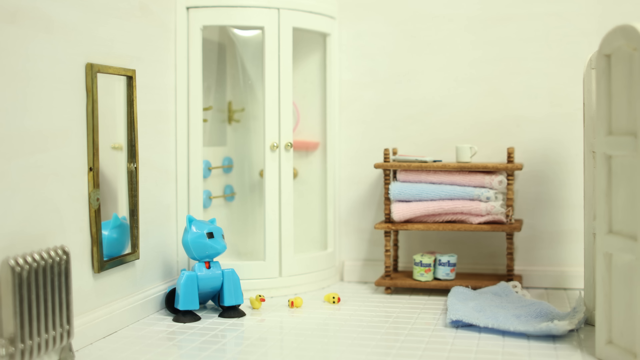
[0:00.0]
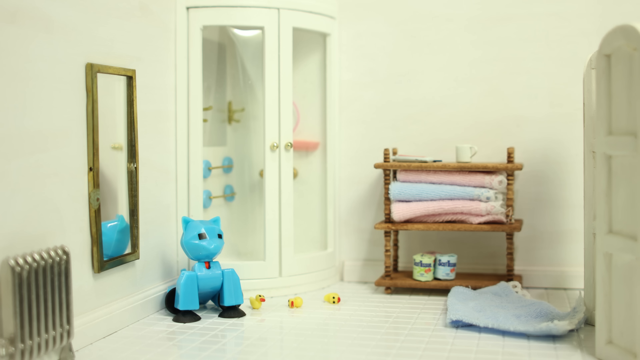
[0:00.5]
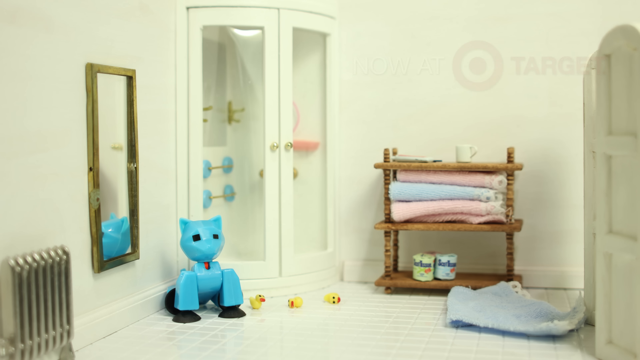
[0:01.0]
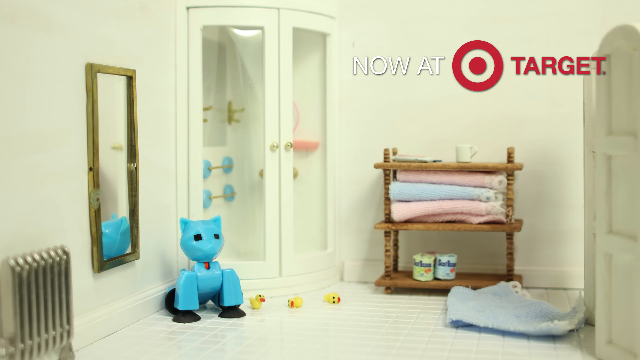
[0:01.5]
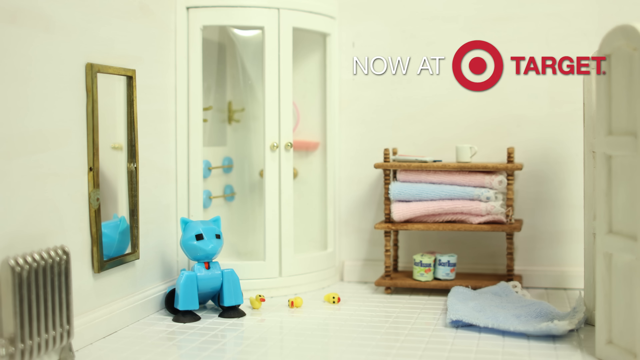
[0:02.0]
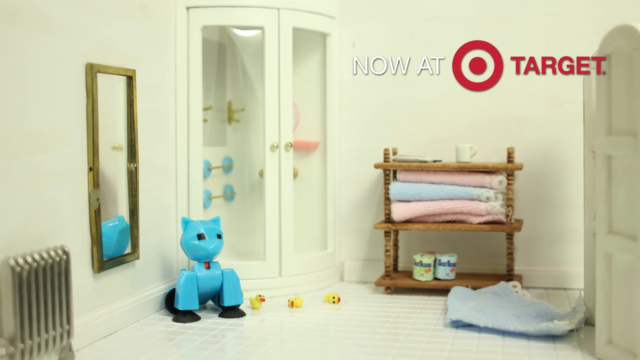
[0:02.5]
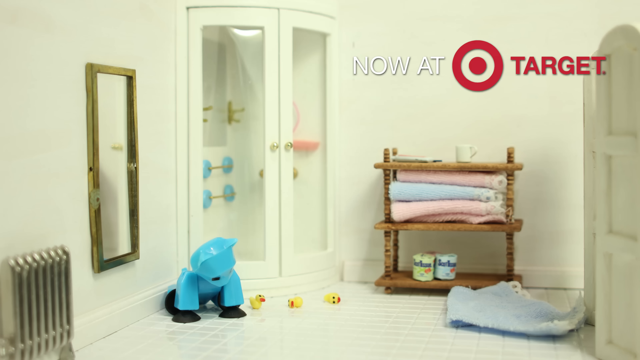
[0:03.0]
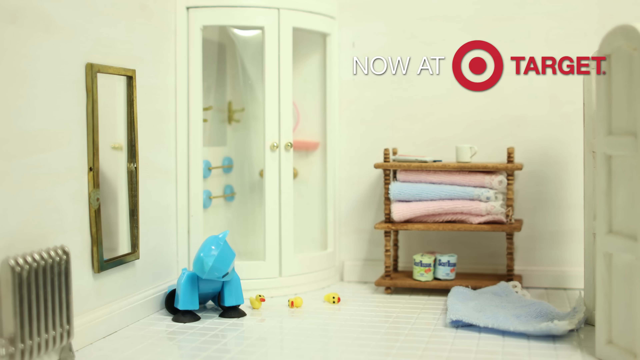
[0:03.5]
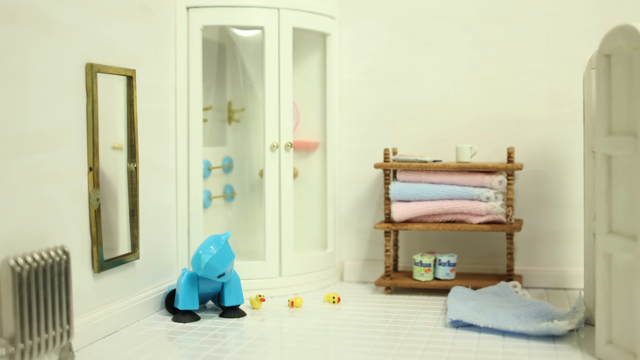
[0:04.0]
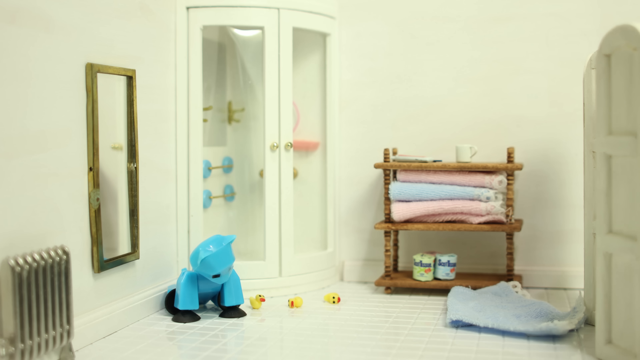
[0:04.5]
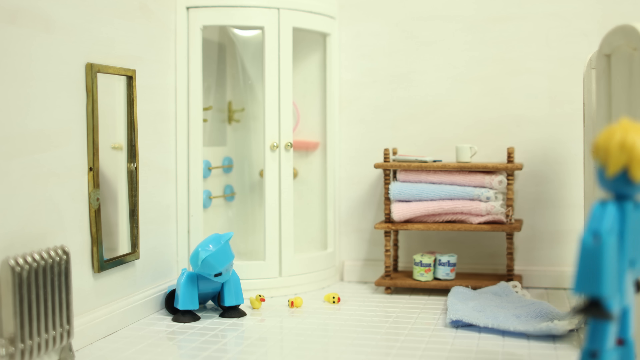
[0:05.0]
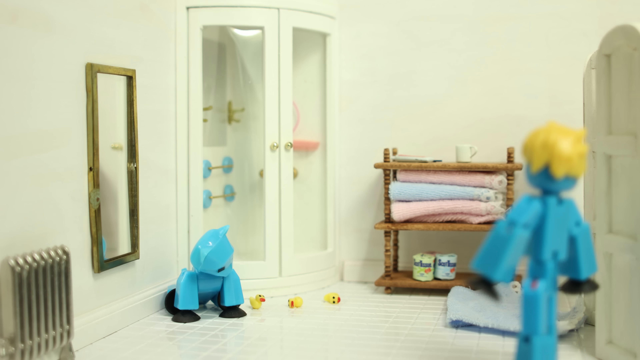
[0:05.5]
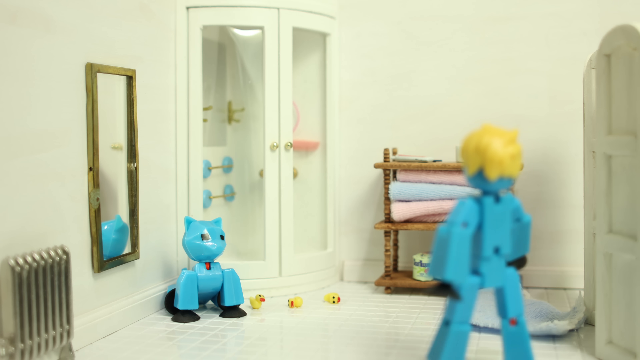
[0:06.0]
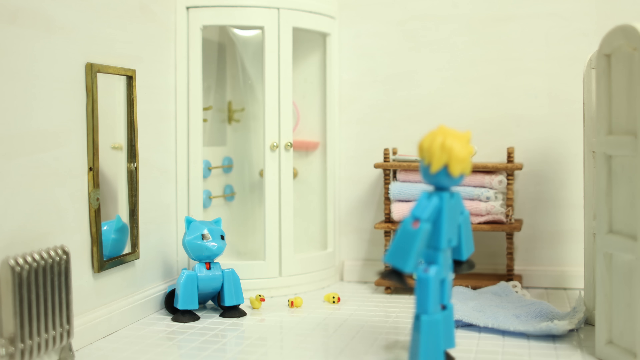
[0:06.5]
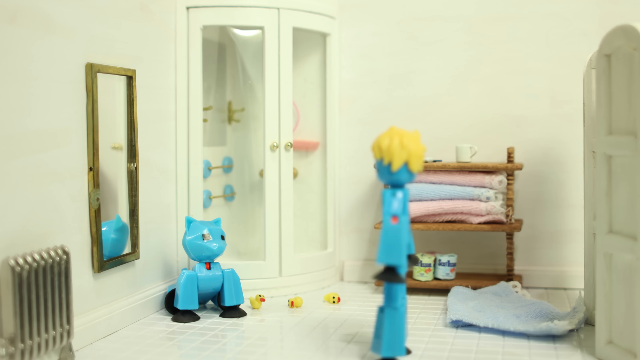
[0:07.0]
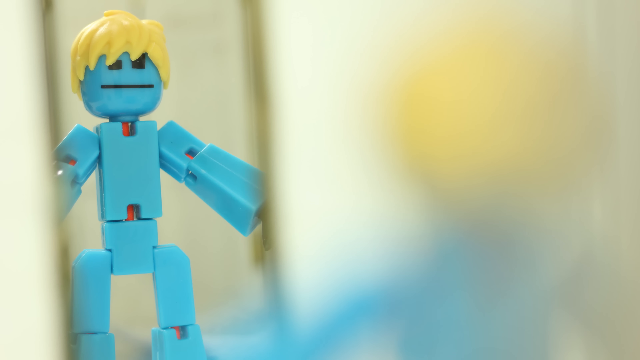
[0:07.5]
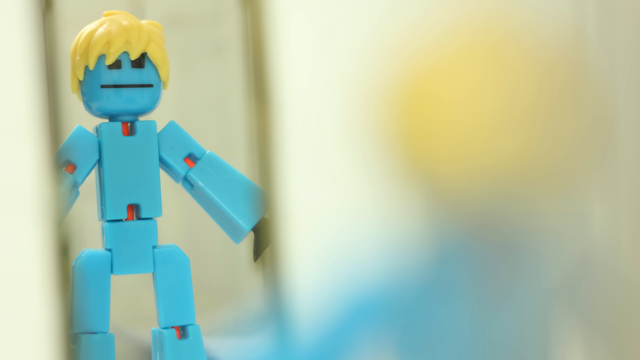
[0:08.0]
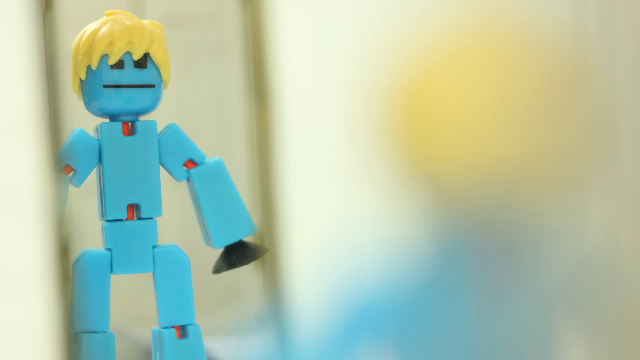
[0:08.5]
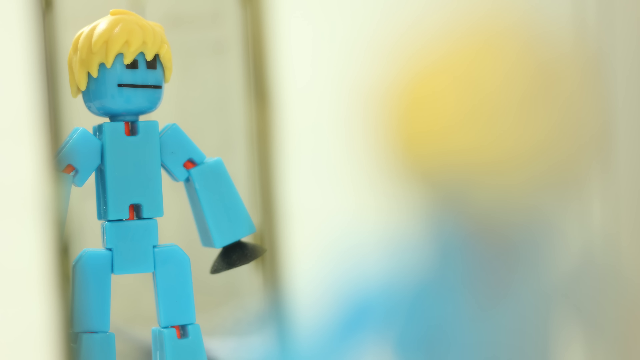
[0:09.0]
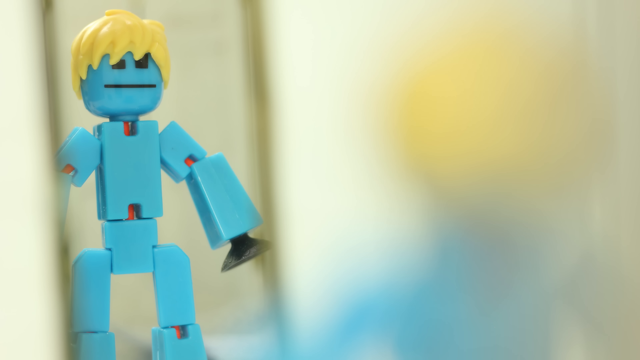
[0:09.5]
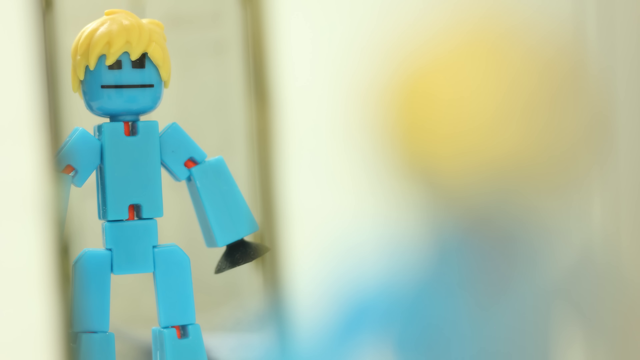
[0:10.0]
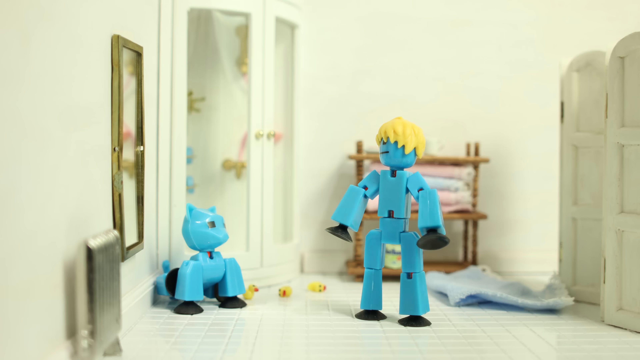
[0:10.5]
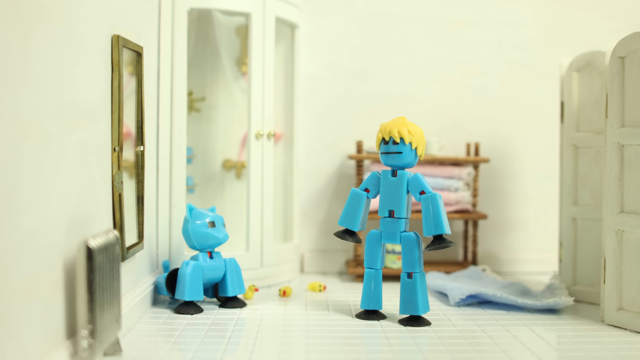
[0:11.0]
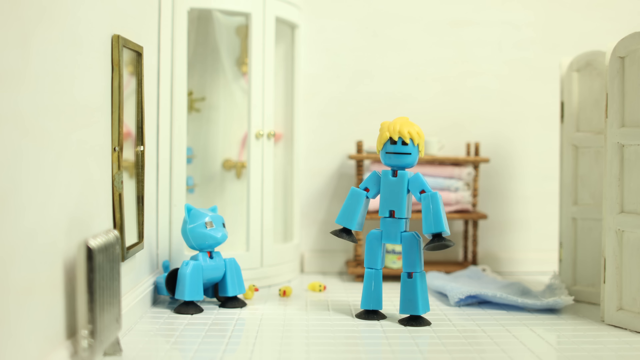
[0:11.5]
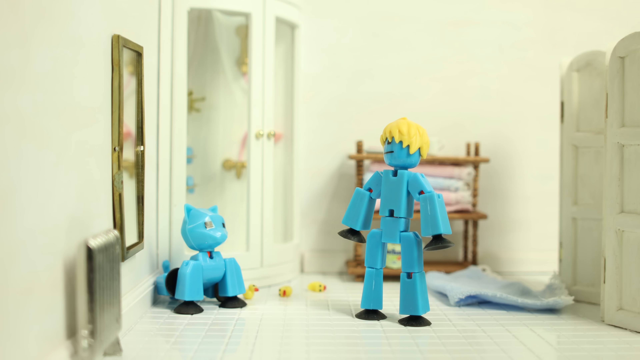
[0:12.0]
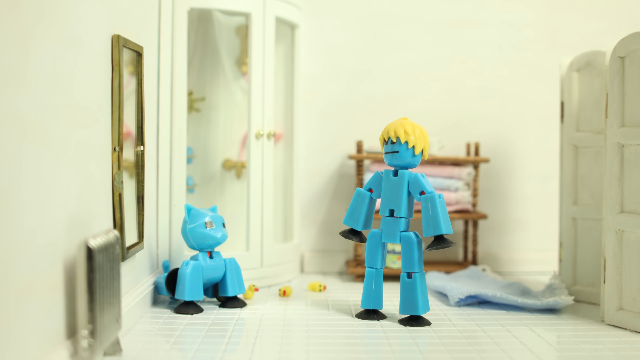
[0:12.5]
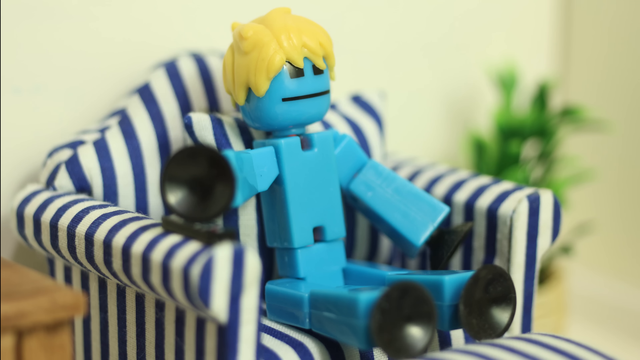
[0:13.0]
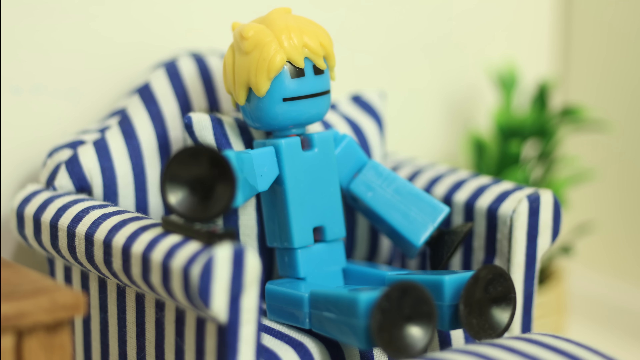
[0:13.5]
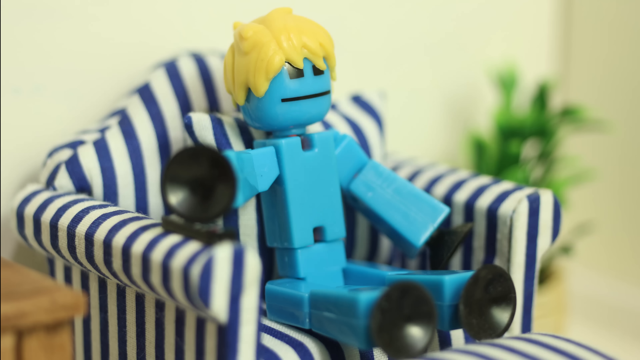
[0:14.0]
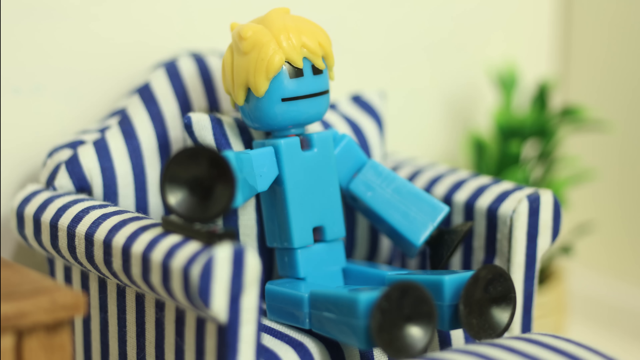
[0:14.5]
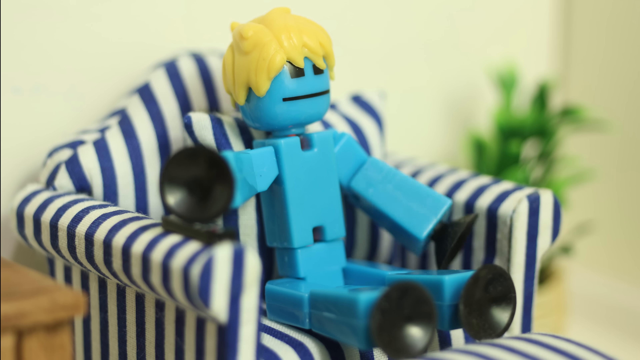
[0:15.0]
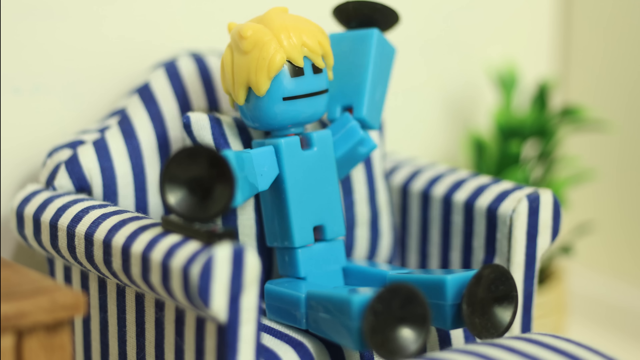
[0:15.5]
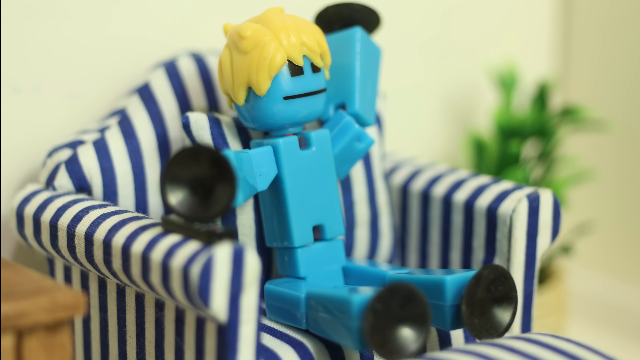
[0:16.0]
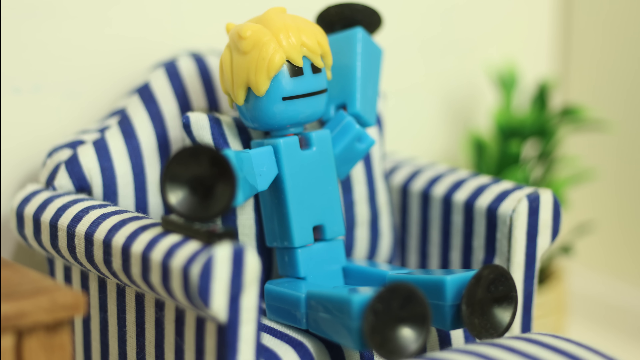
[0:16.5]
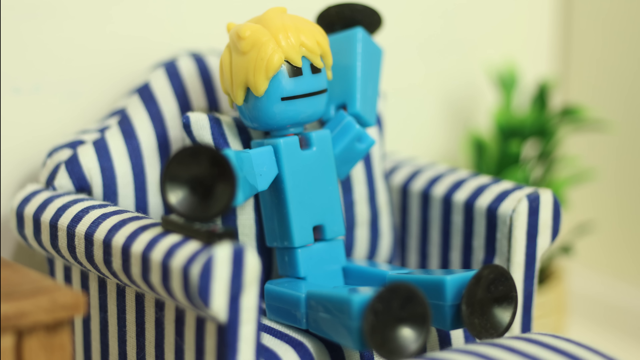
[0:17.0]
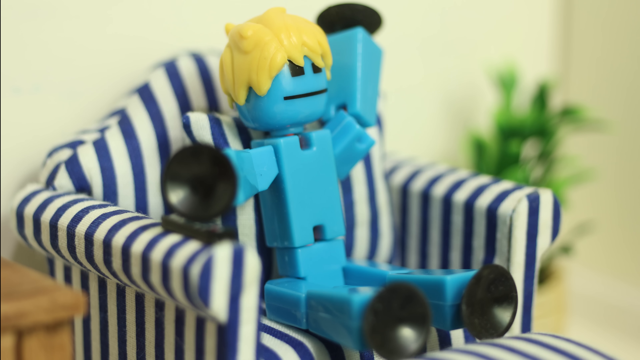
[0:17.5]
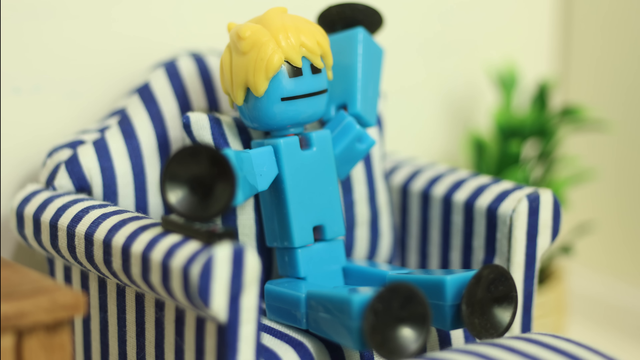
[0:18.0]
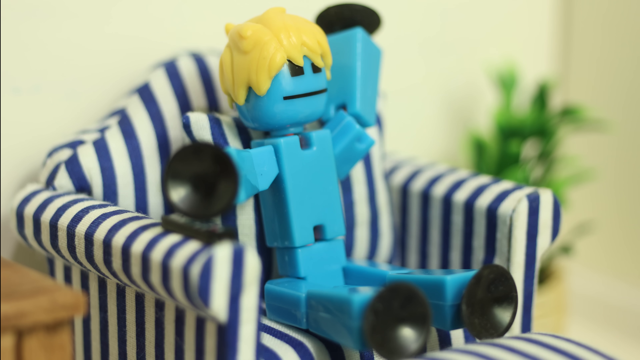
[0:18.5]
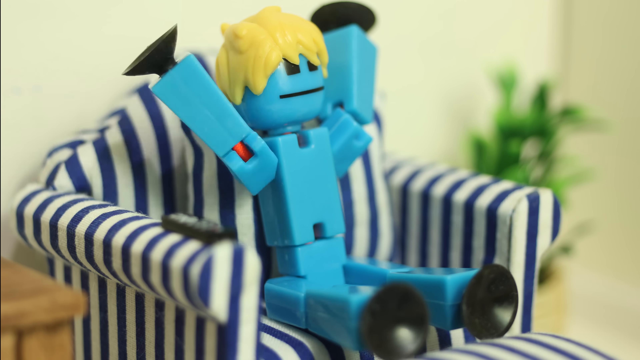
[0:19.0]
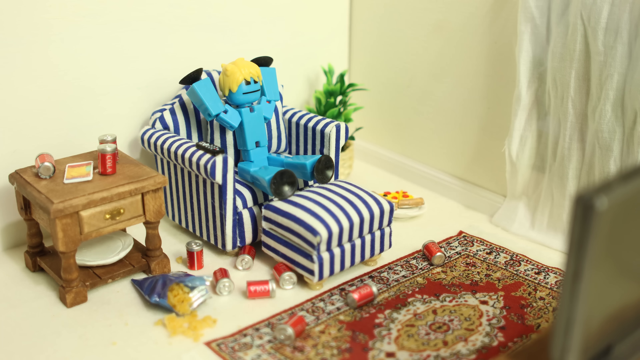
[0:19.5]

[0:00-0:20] The video appears to be a Target ad and seems to show a room for a little kid. Almost Lego-type model figures are shown, maybe a little kid and his mom. He is sitting on a blue striped chair with a table beside him, and there is also a table in the room. There could be toilet paper on the bottom row. The room turns out to be a bathroom: there are little rubber ducks on the carpet, apparently some towels or rugs, and even a coffee mug. There appears to be a shower with two doors with gold handles. There is a mirror, and a radiator on the side of the wall. A little dog in the bathroom seems almost to be waiting. A figure with yellow hair comes in; it is a boy, with a dog, and he is sitting on a blue striped chair. There is a little planter in the back, and some pops and chips are on the floor.